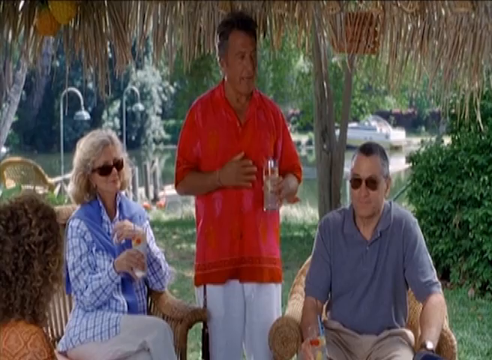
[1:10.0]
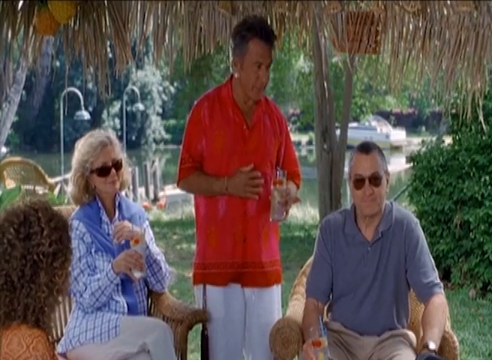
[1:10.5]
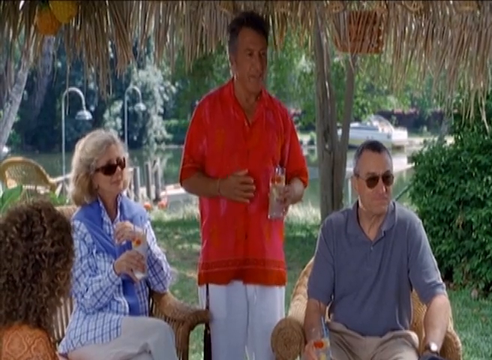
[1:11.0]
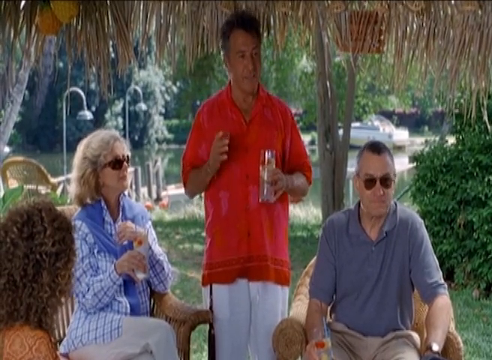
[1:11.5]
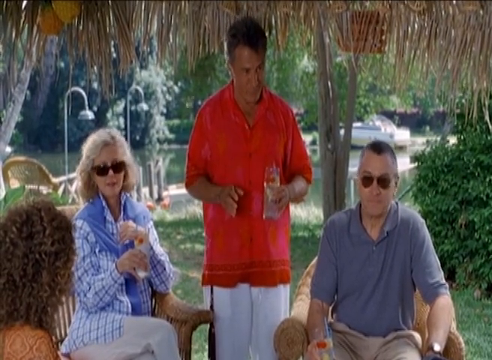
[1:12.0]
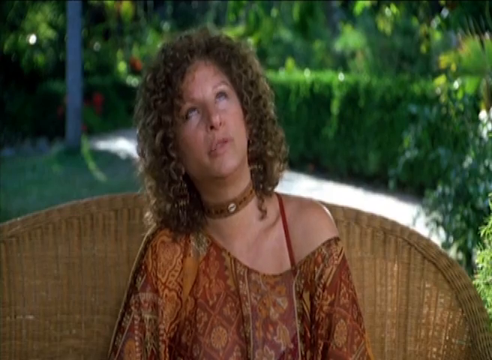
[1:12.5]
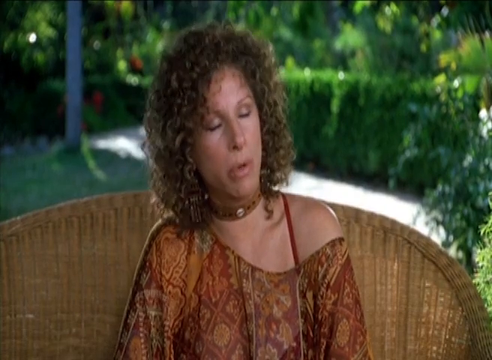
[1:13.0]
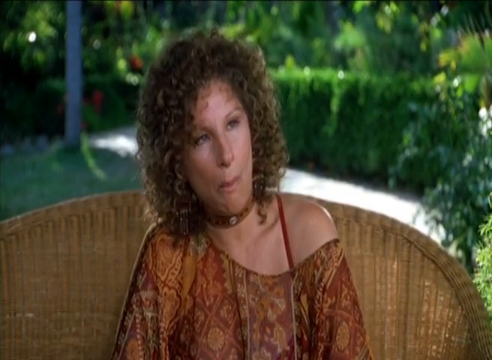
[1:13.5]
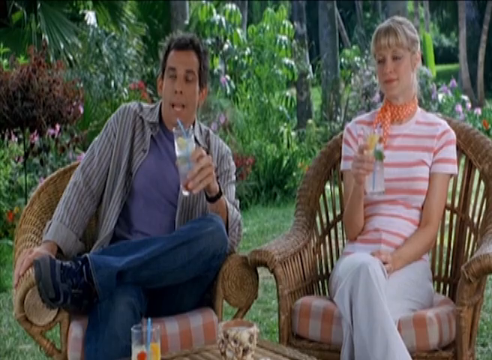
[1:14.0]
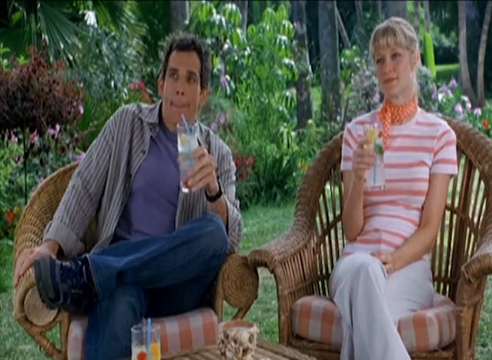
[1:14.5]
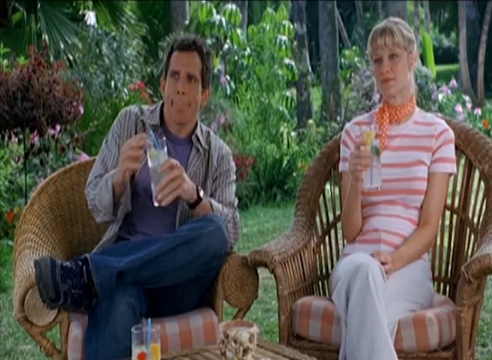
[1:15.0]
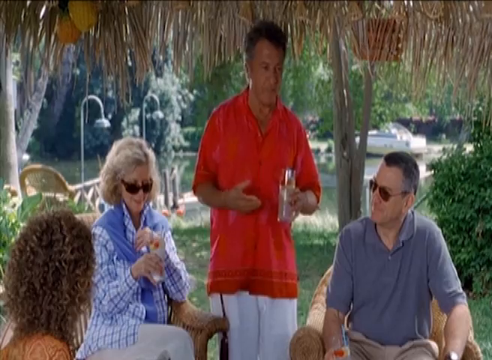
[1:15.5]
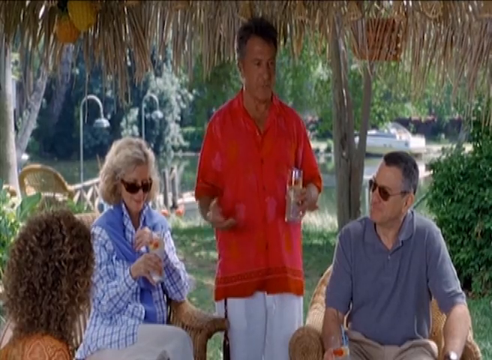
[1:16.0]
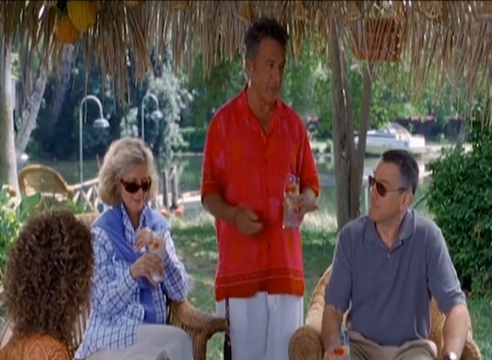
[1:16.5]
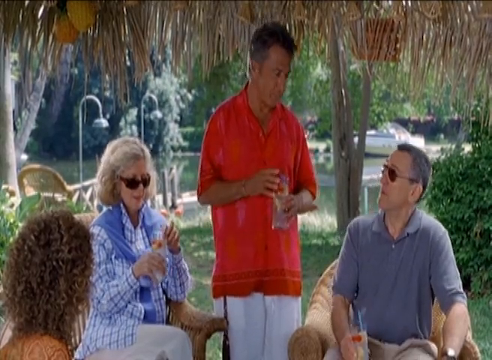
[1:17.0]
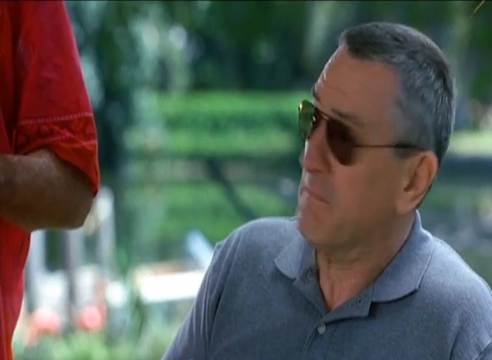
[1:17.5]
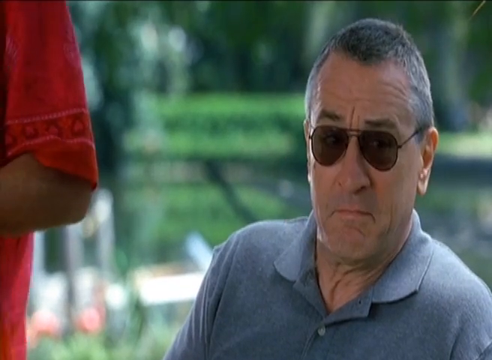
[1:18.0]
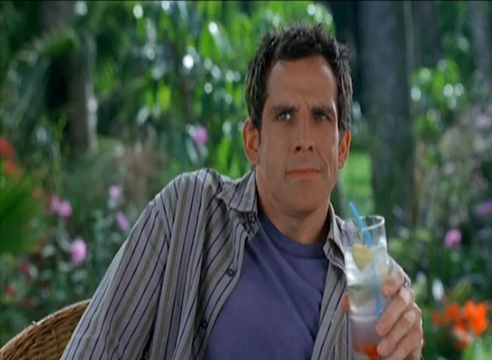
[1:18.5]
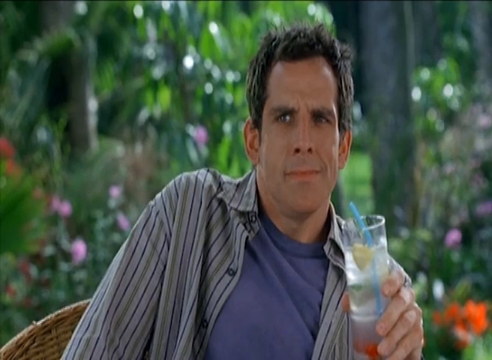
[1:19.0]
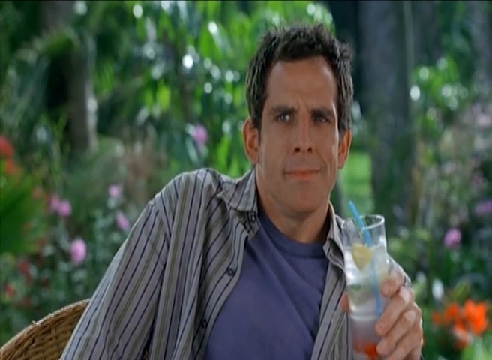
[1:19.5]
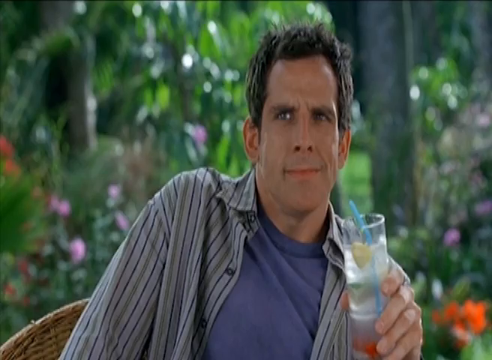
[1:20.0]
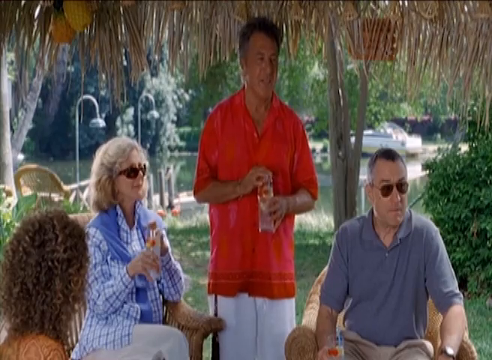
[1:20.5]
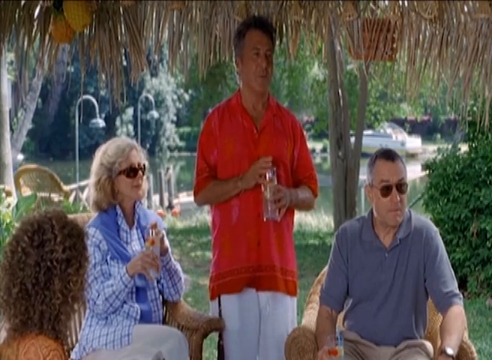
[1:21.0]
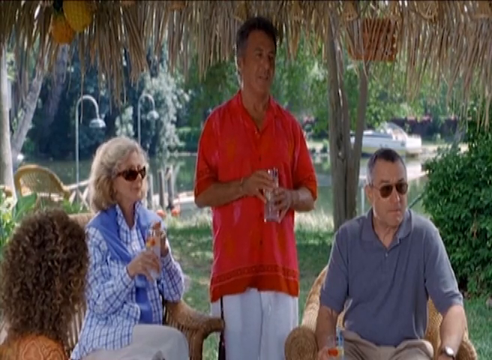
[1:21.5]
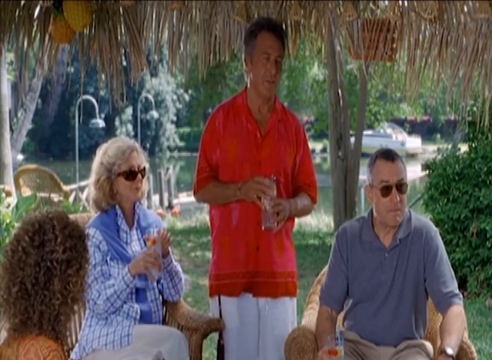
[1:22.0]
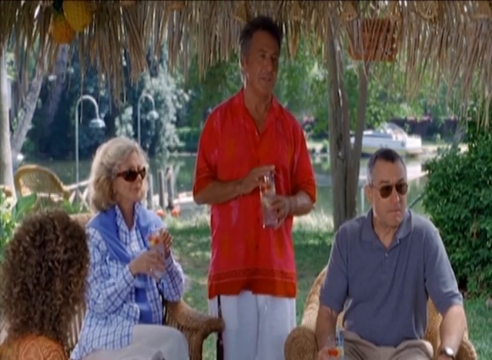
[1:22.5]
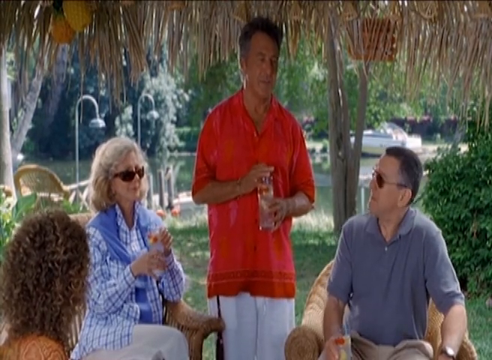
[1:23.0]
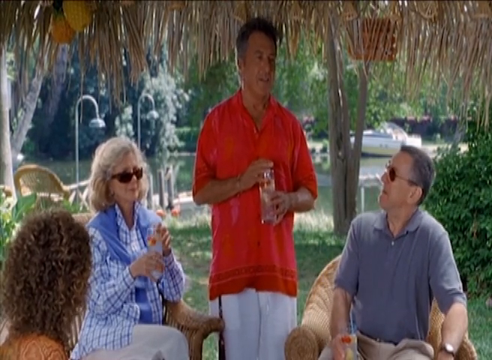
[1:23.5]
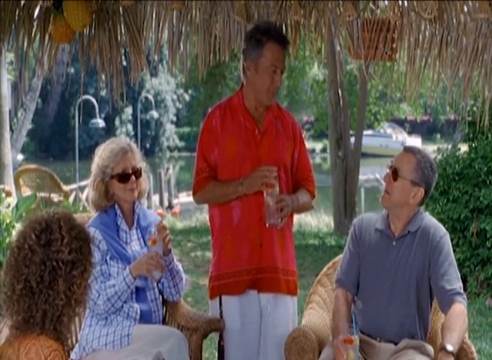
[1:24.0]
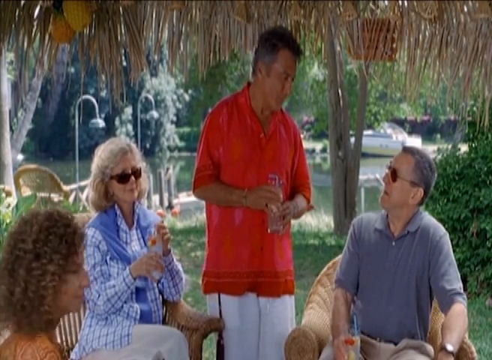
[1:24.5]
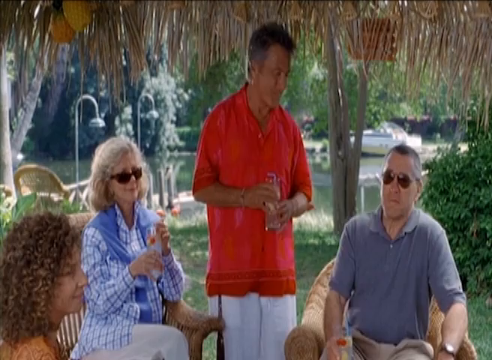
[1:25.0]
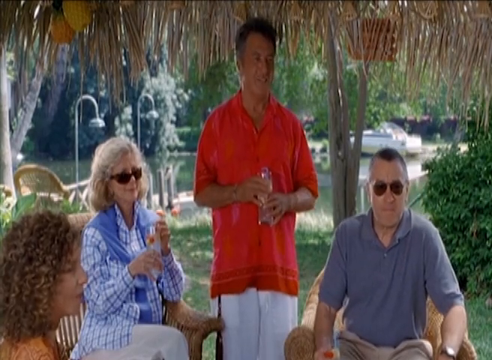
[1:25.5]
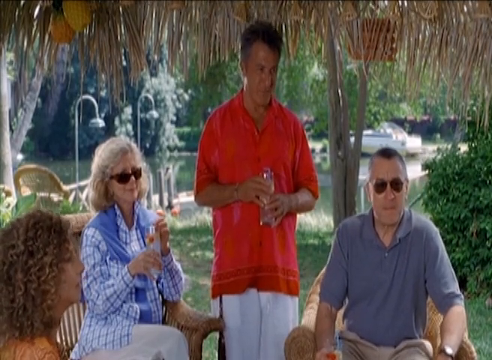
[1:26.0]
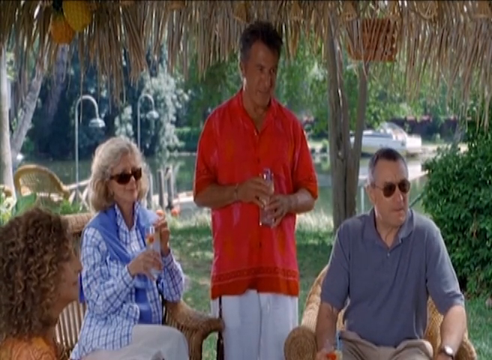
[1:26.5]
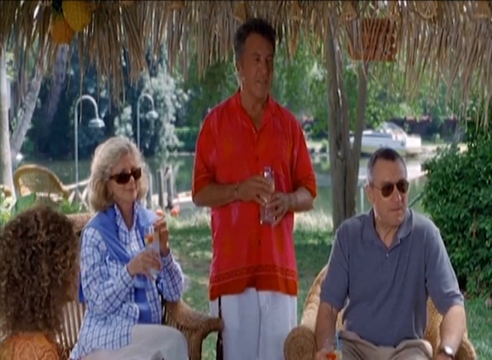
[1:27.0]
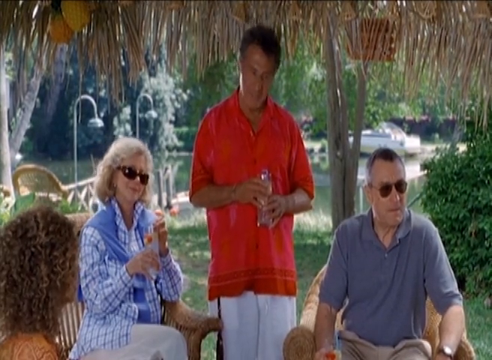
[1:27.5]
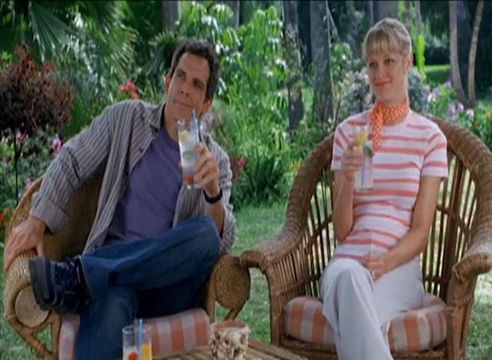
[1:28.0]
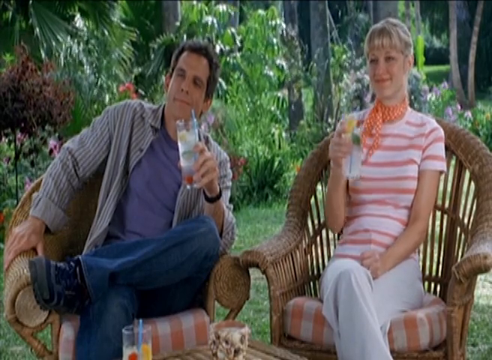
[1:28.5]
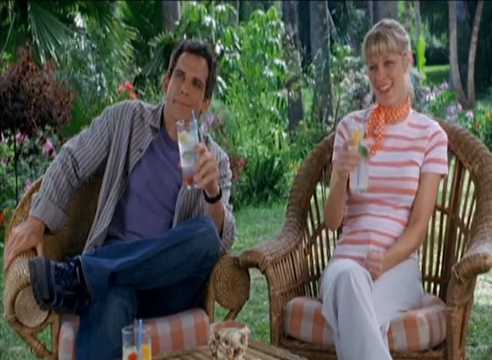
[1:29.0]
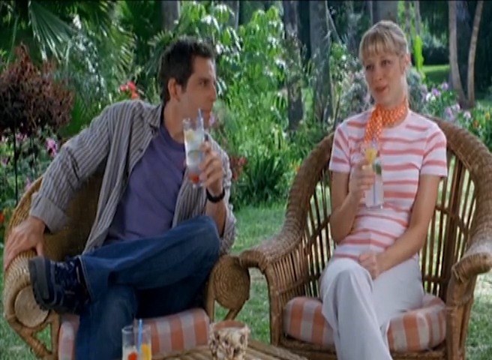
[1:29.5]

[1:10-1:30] The older gentleman in the red shirt stands holding his drink in his left hand with his right hand on his belly, while the older gentleman wearing sunglasses is seated on the right and the older lady with dark glasses is seated on the left. He keeps talking. The older lady with curls, seated, talks with a pensive look and seems to be nodding off while talking. The young couple, a young man and a young woman, sit holding their drinks, the young man with his left hand and the young woman with her right; the young man talks, and both look at one of the other people. The older gentleman in red, still standing, talks and gestures with his right hand. The seated older gentleman with dark glasses looks confused while looking at the man in red, then looks toward the camera. The young man looks puzzled. The man in red, still standing, talks, grins and laughs. The young couple, seated with their drinks, look like they are listening intently, and the young woman starts speaking.